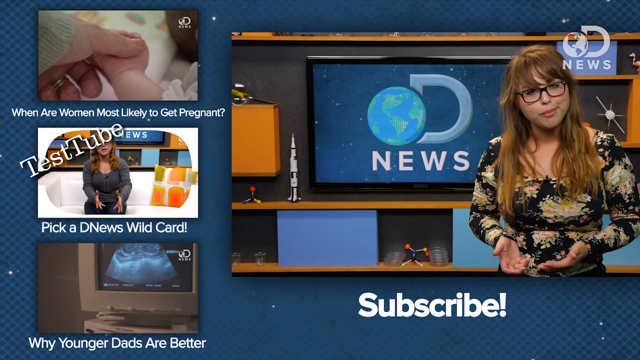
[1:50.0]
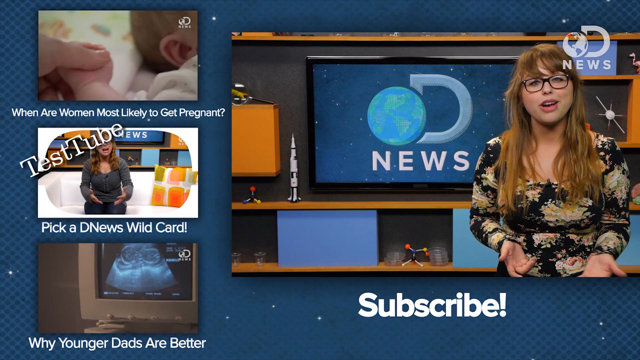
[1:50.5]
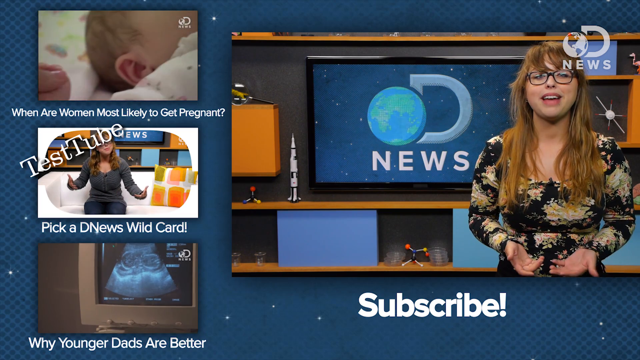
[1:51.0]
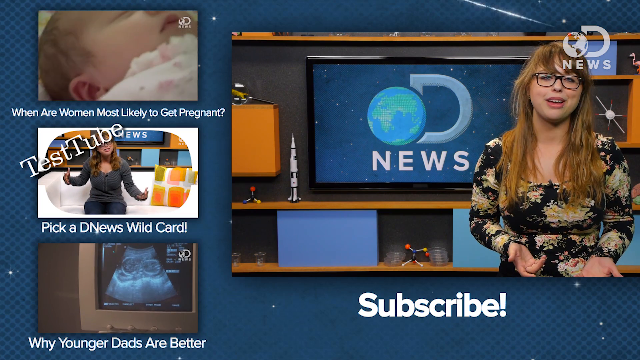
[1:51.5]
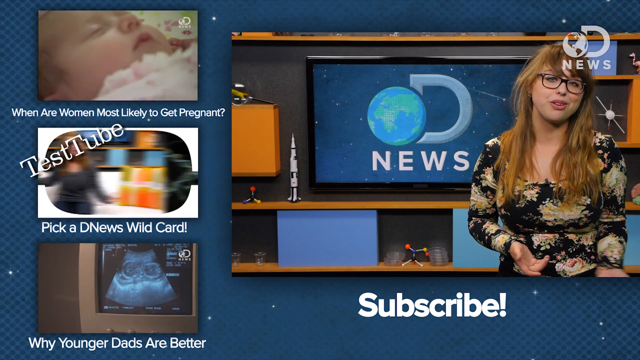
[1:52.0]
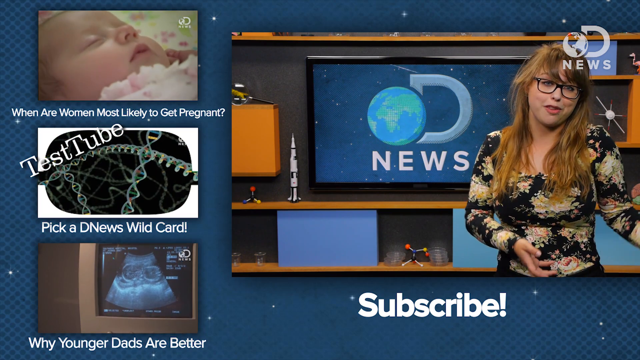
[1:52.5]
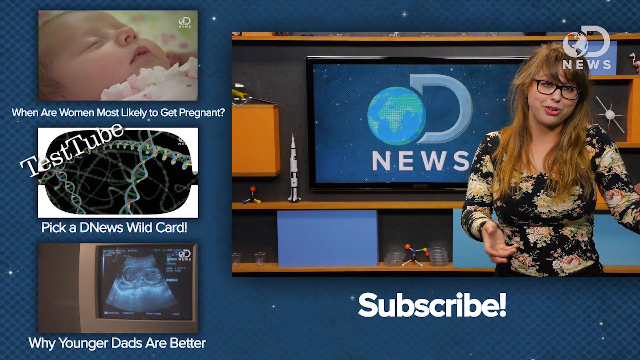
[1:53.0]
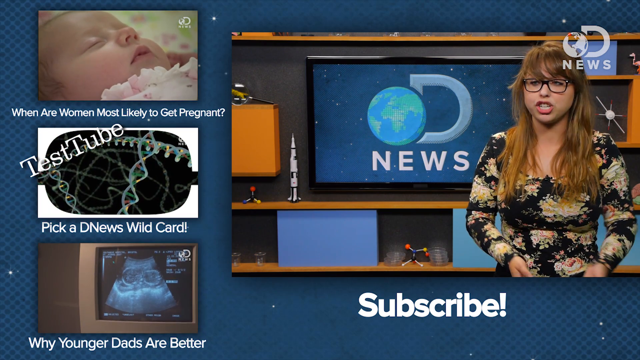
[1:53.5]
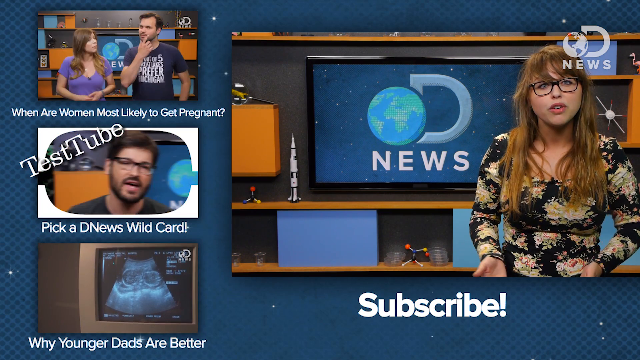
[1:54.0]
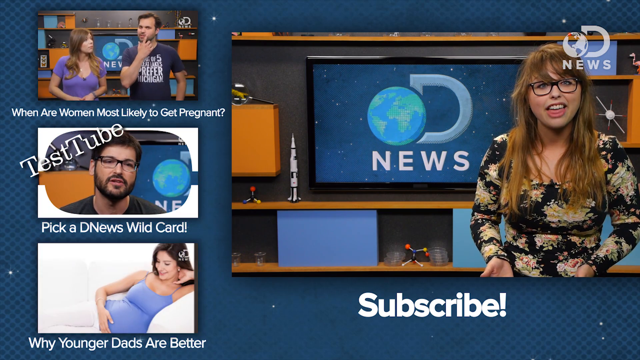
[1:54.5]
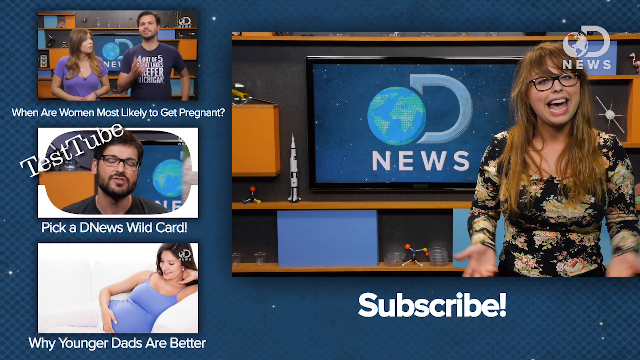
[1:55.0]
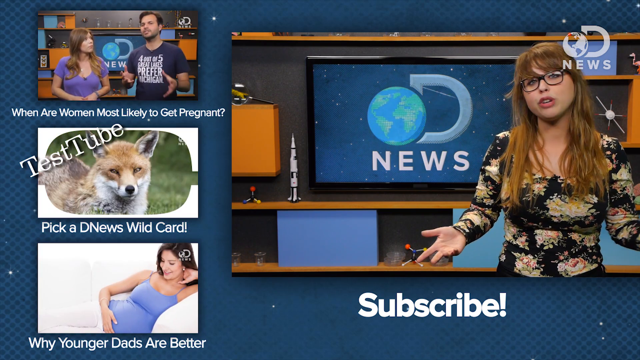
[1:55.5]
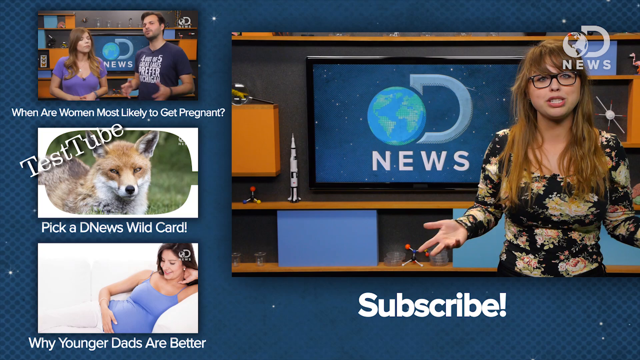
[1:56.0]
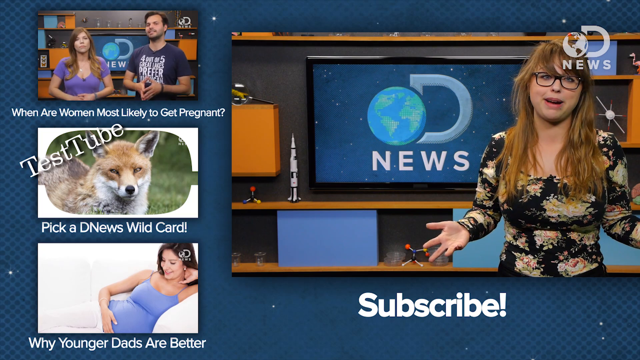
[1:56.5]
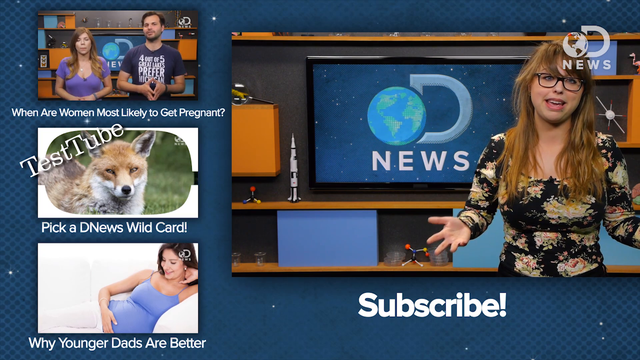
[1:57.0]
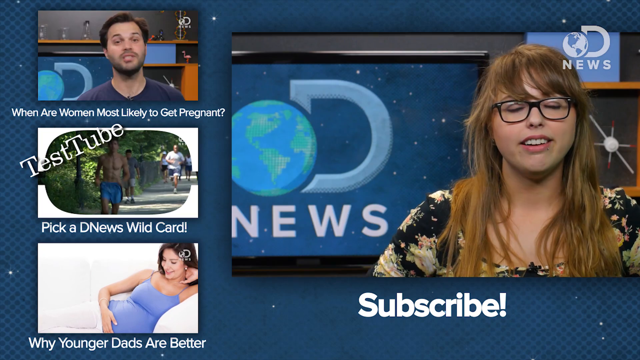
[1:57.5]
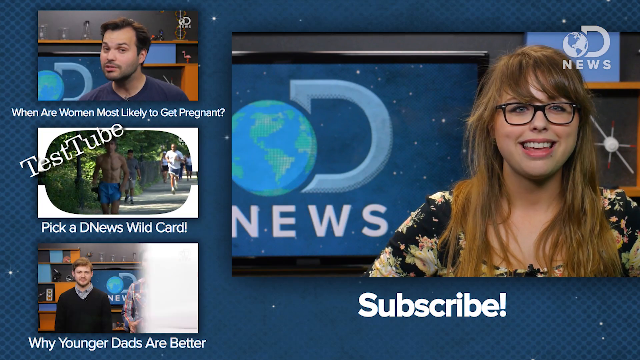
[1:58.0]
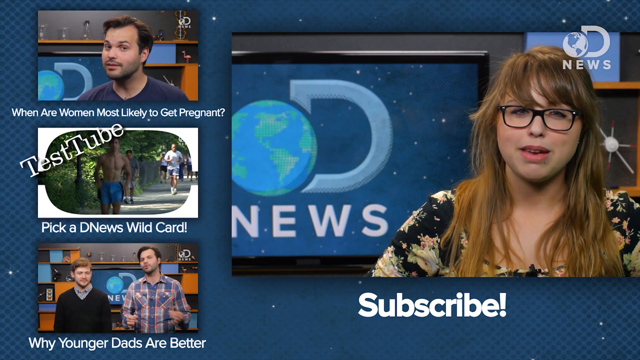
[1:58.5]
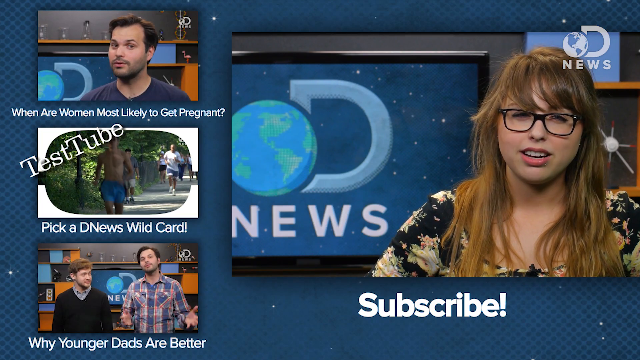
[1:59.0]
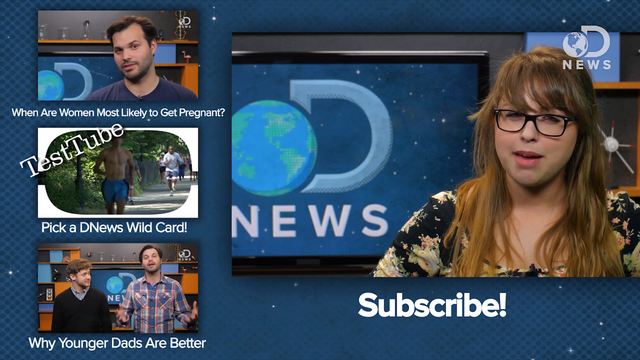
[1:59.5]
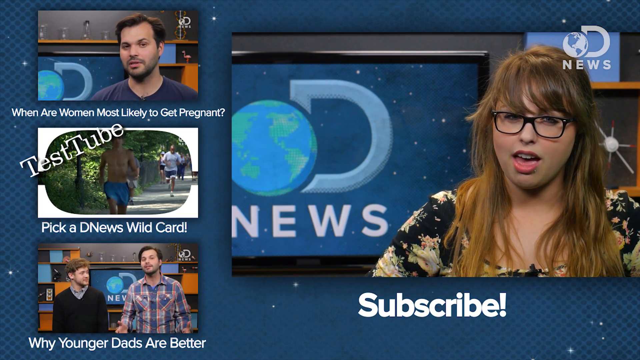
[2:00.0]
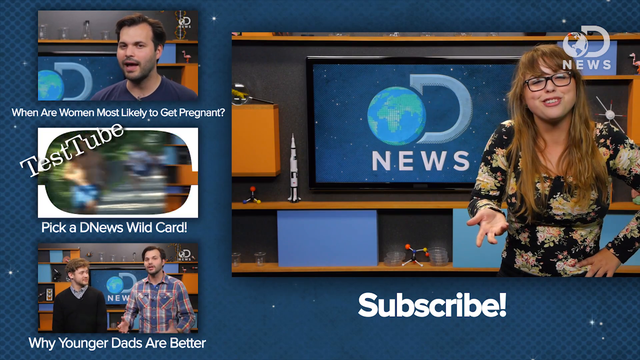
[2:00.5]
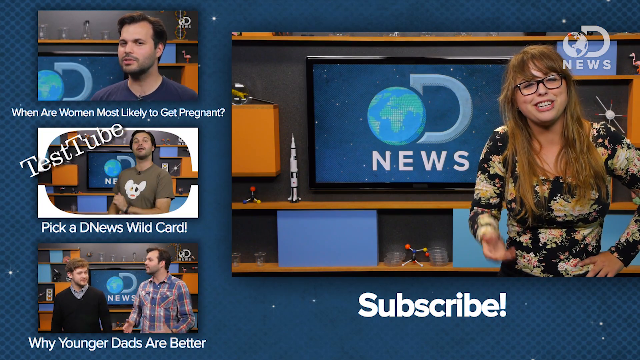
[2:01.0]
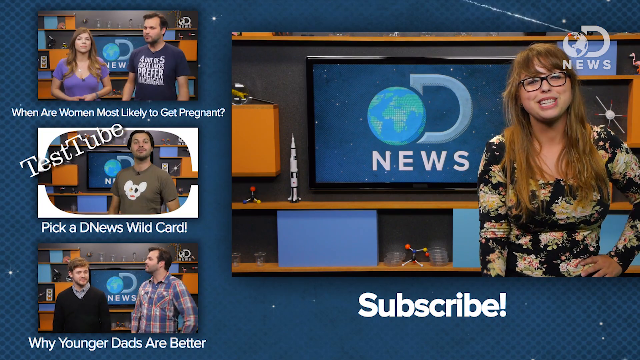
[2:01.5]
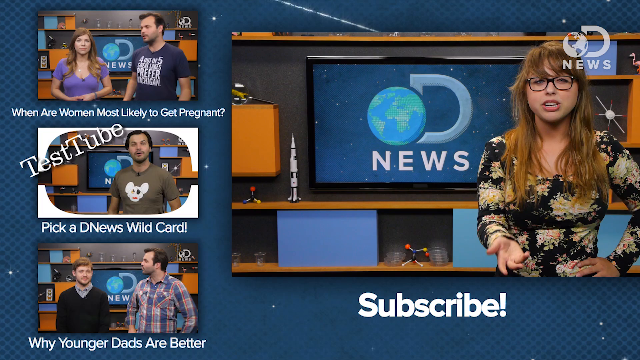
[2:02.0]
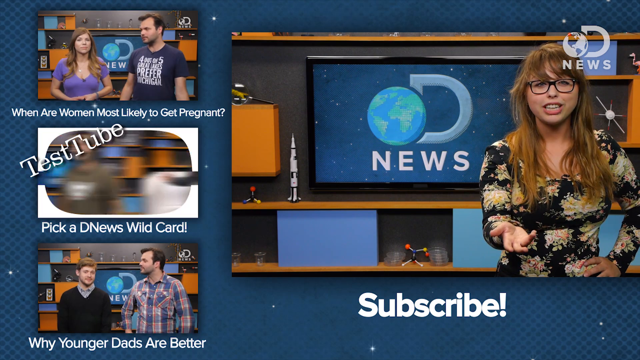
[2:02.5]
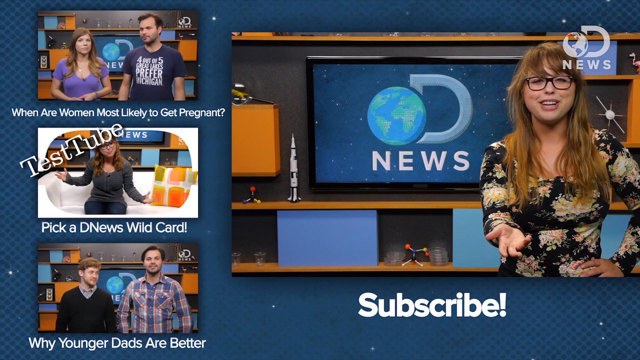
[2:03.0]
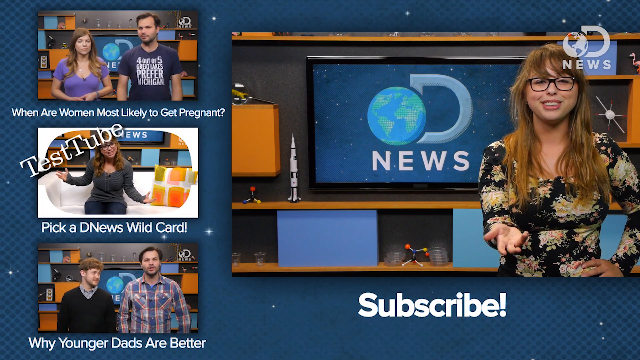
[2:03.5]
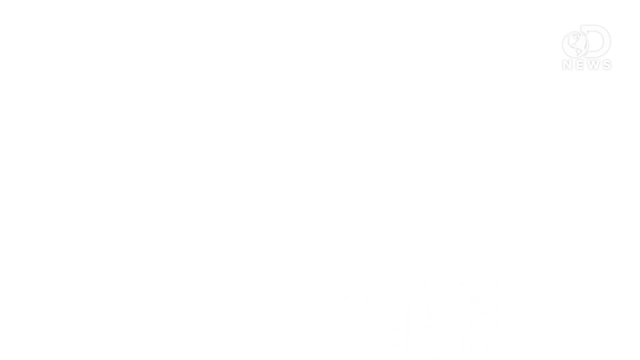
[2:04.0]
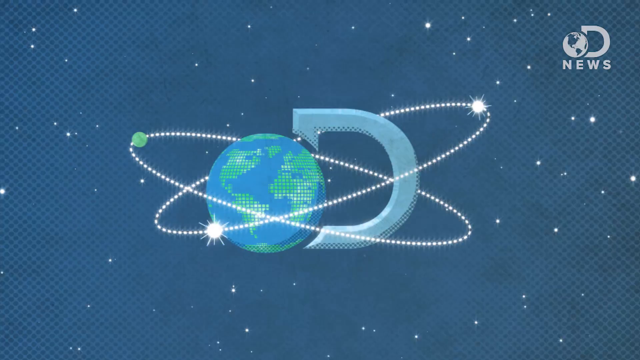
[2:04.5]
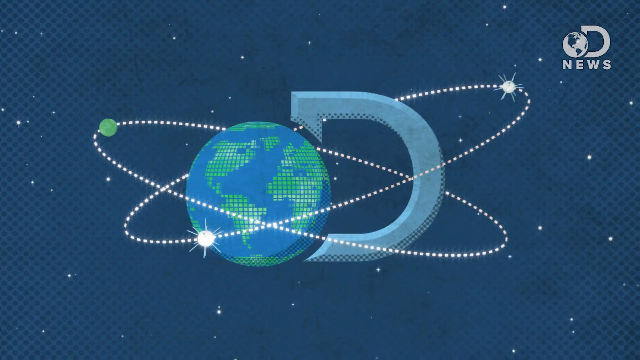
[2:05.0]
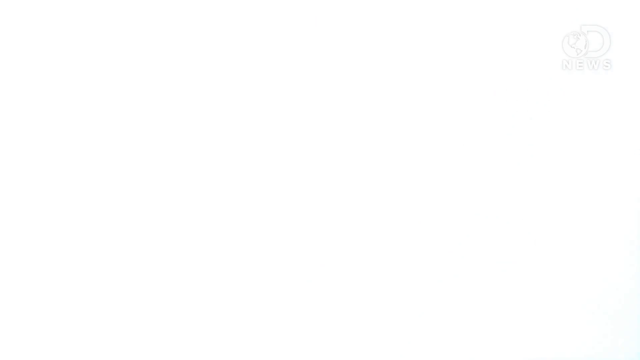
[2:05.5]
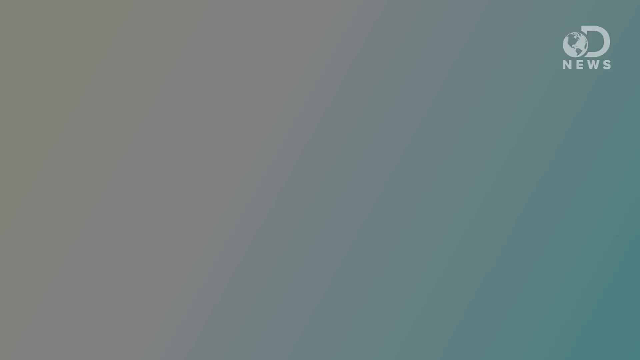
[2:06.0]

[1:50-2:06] The woman talks to the camera. She has a white skin tone, orange-brownish hair down to her chest and black glasses, wears a black dress with white flowers all over it, and makes a lot of hand motions. Behind her is a large television with a very big letter D, an image of the earth to the left of the D, and the word "news" in white. To the left and right of the television are several small space toys: a spaceship toy to the left, DNA strands to the left of that toy, a white object on the right side that is potentially a planet, and a pink flamingo toy at the very top right. On the left side of the image are several videos, one titled "when are women most likely to get pregnant". Below that is the text "test tube, pick a D news wild card", and at the very bottom left is another video, "why YouTuber dads are better". At the very bottom middle is the word "subscribe!" in white text. The woman keeps talking, and at the very end a close-up shows her talking with a lot of hand motions, her hand on her left hip. The final scene shows the same D symbol with the earth to its left, with several planets and stars going around the D in a sort of circular motion.